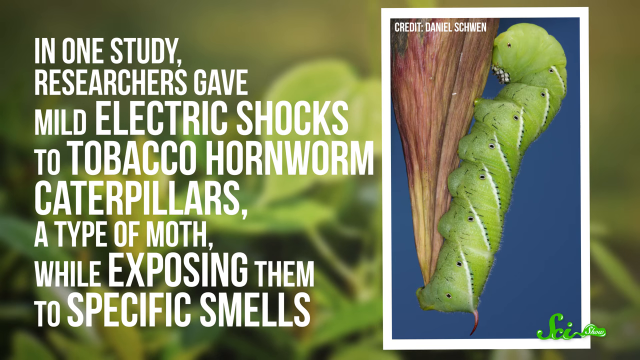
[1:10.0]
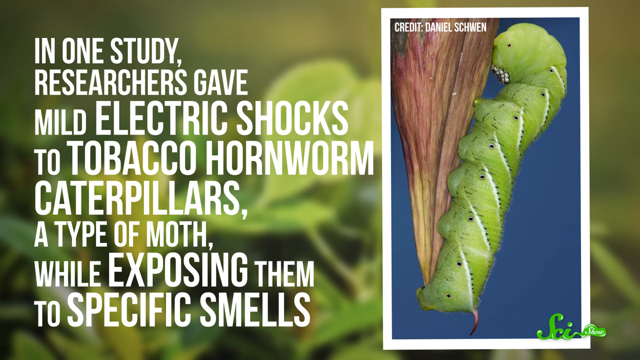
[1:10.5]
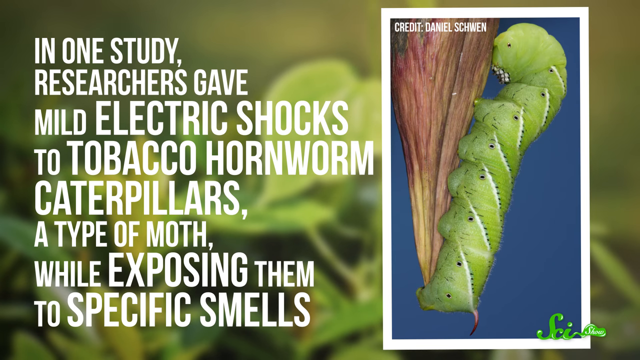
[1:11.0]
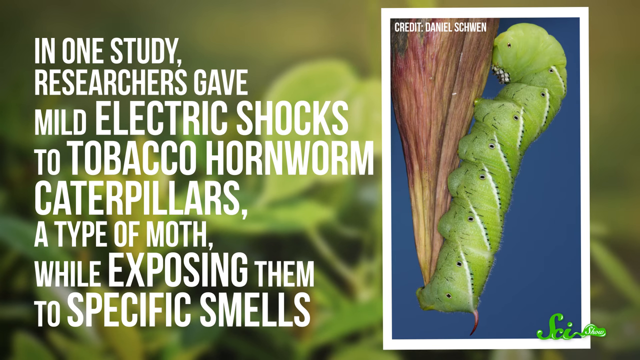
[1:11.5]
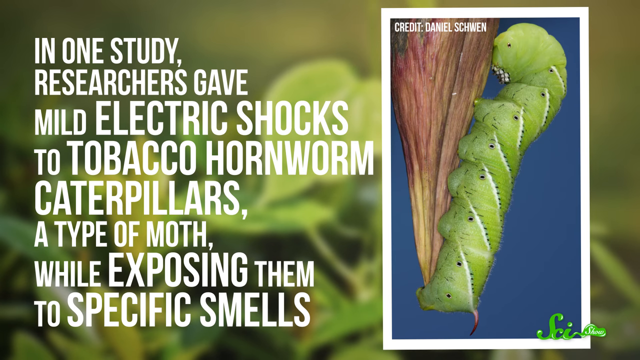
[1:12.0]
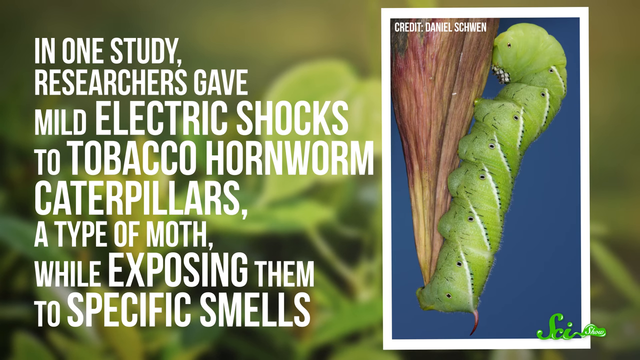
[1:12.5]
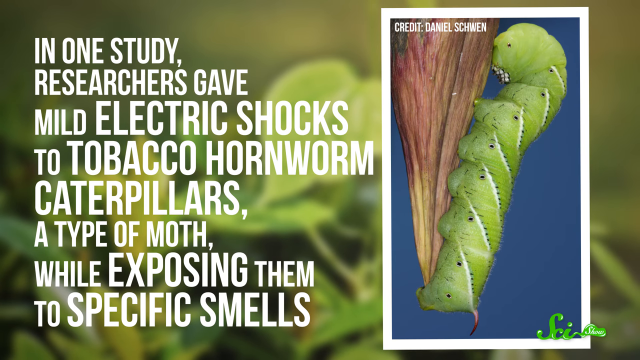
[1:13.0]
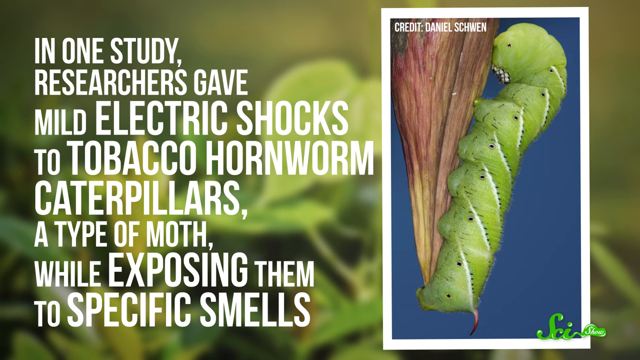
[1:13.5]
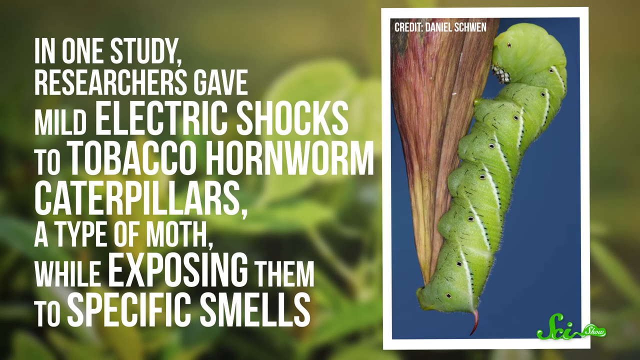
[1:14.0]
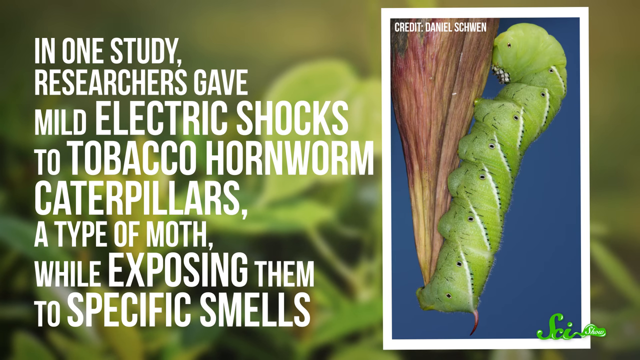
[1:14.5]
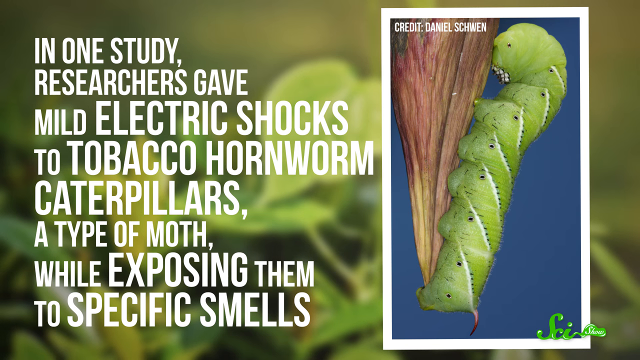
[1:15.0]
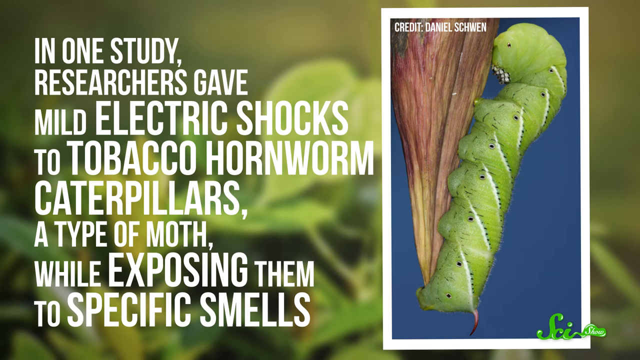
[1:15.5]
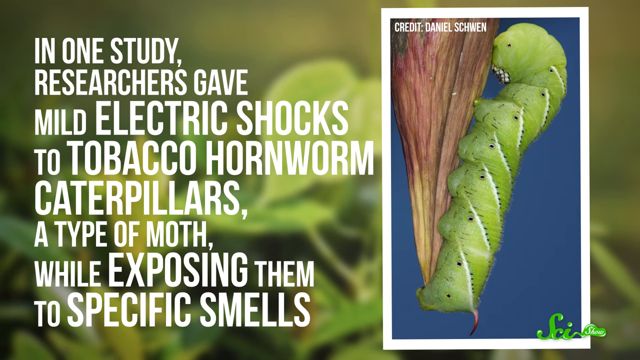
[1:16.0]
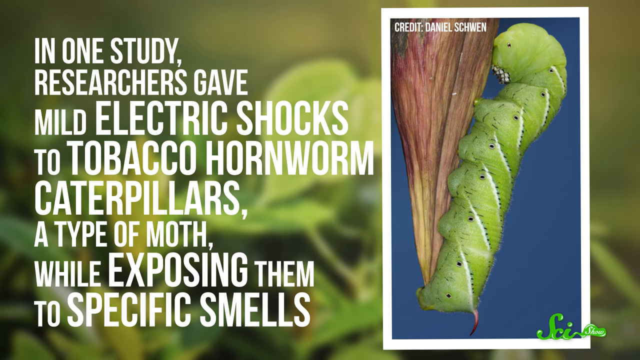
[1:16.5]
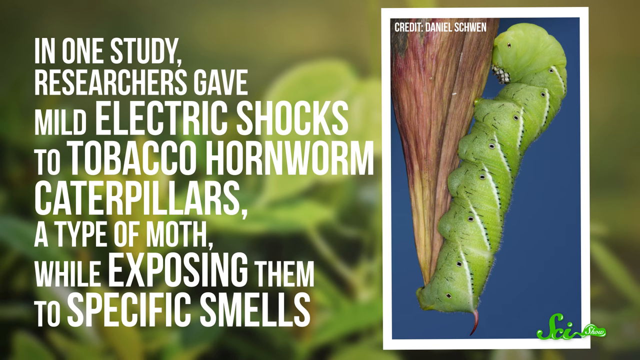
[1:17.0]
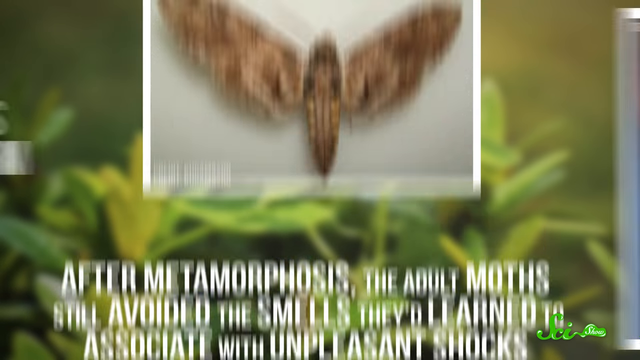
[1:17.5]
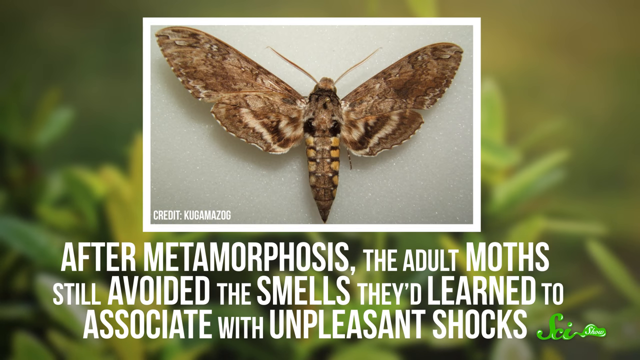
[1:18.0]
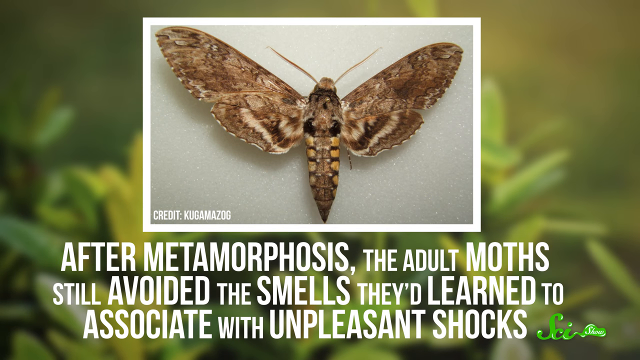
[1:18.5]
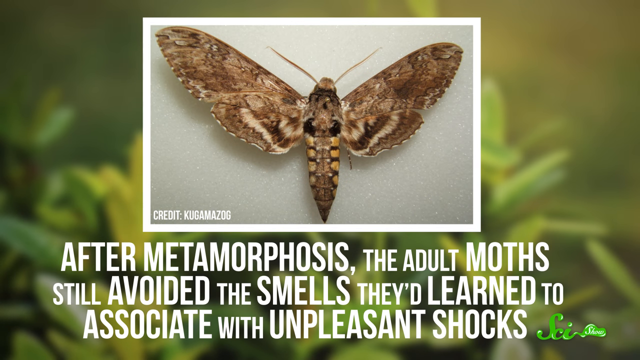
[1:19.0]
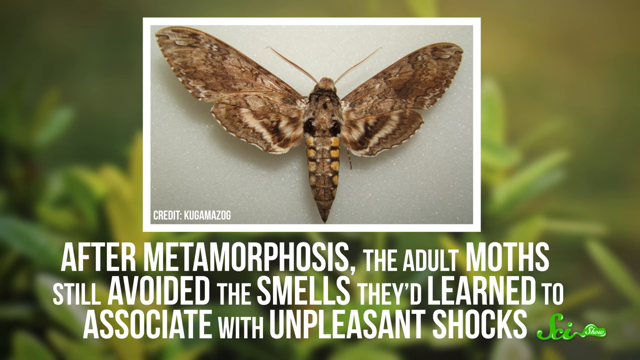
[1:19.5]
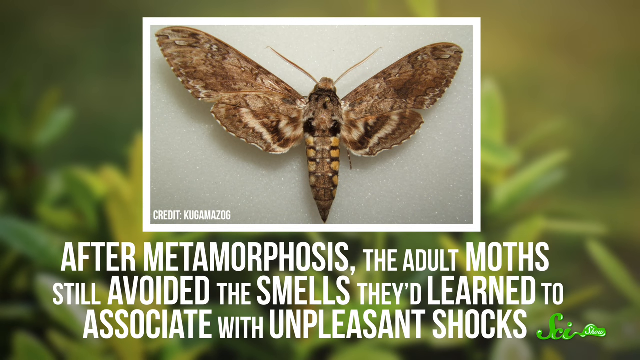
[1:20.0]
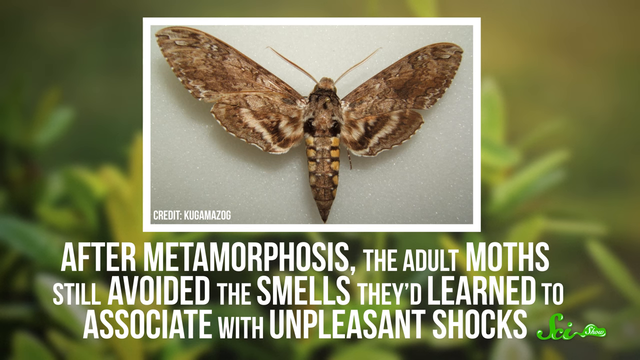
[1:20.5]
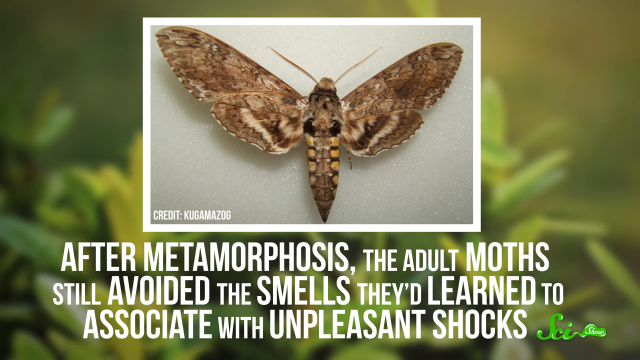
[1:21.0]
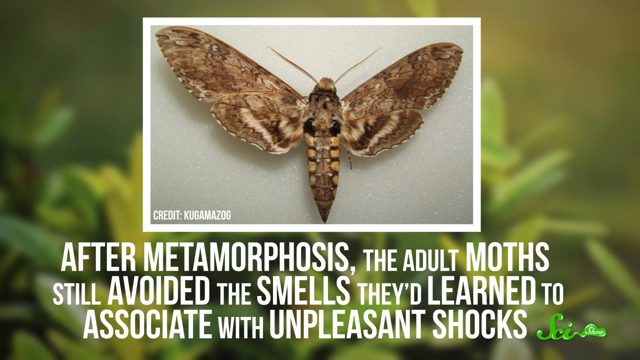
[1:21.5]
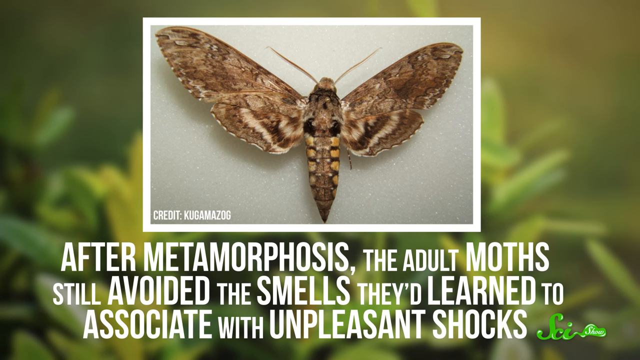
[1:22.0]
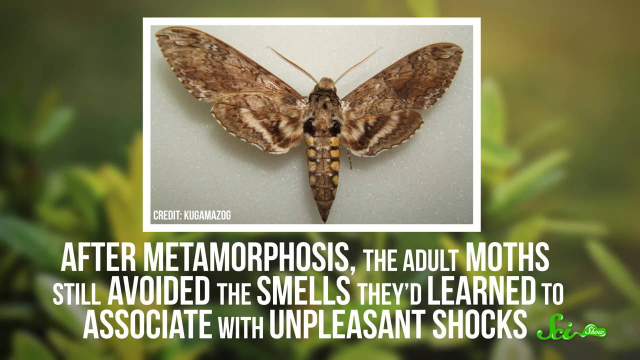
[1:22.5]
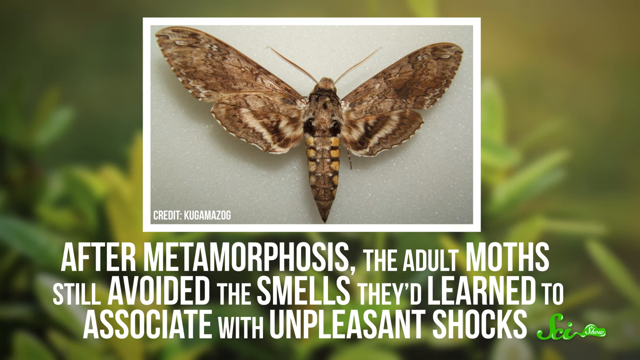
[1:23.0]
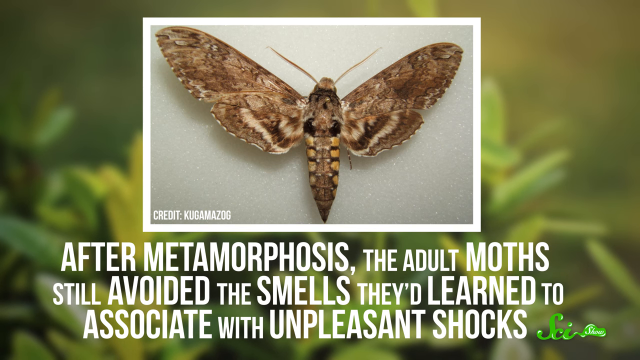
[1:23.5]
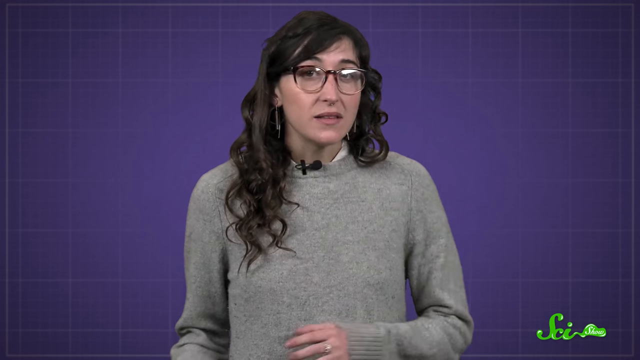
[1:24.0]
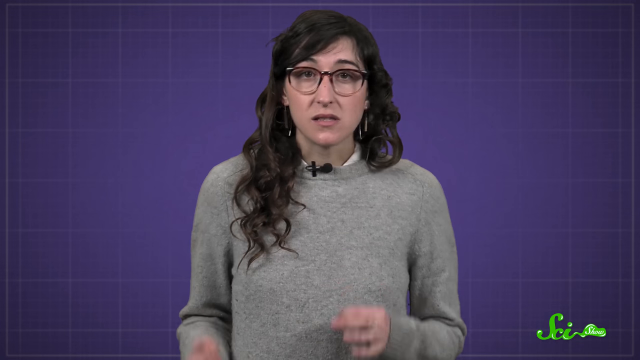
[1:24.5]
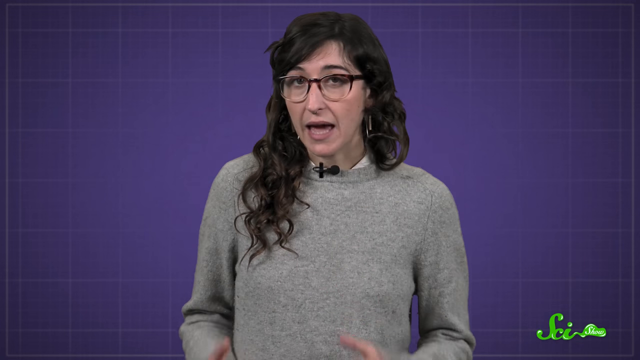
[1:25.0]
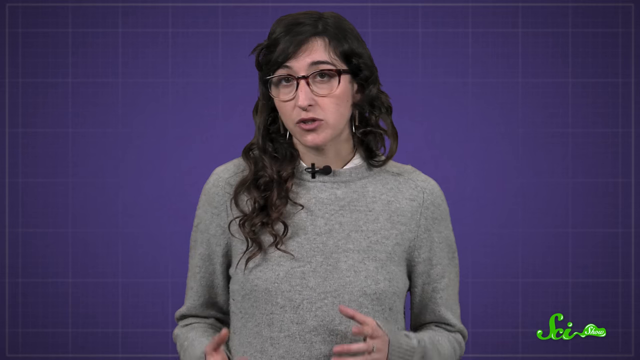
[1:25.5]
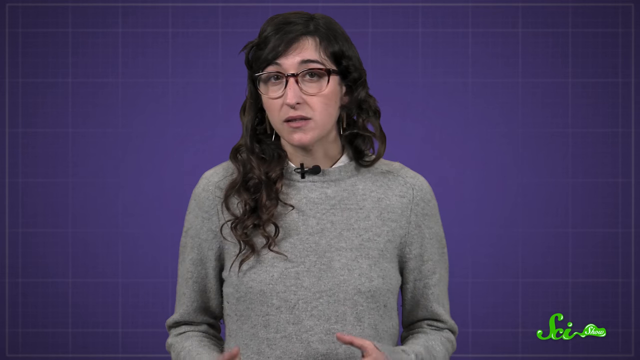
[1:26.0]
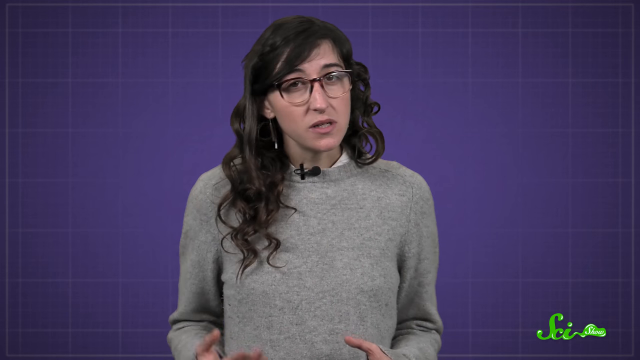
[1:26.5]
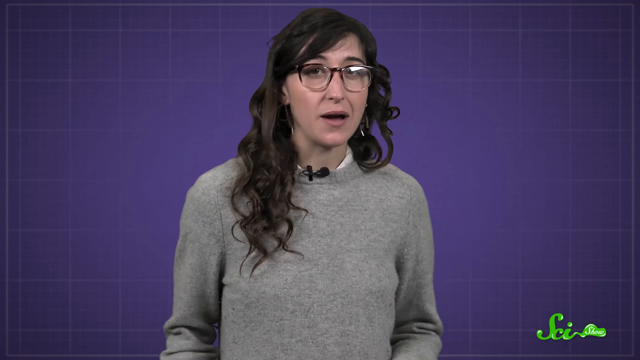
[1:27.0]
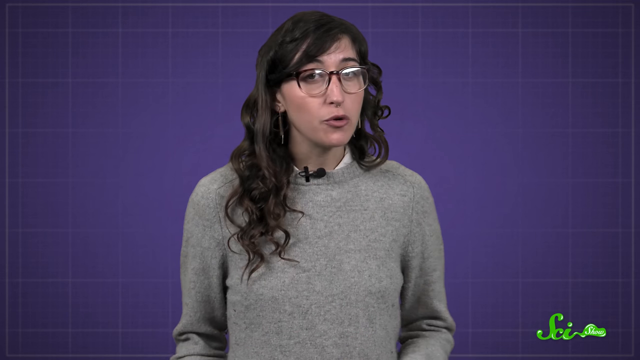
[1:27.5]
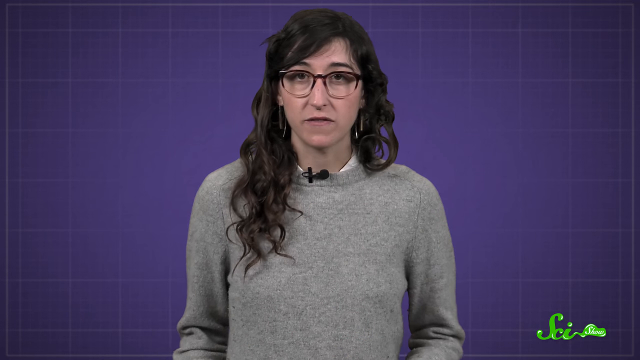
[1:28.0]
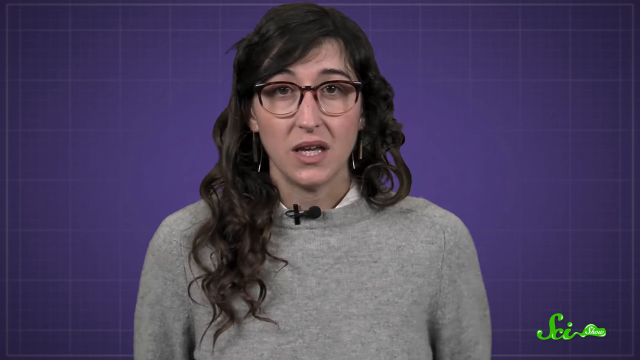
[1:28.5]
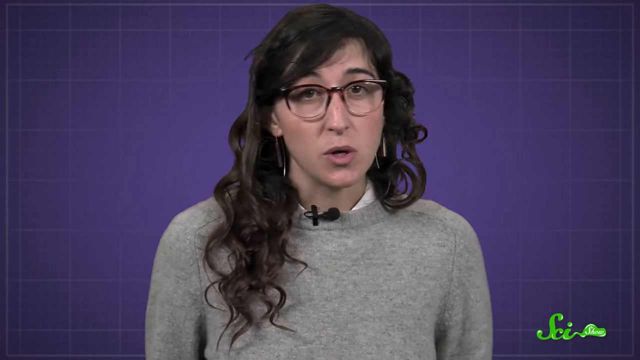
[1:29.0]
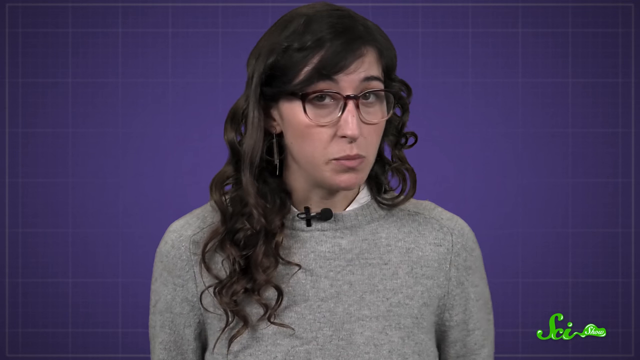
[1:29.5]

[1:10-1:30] The text reads "in one study researchers gave mild electric shocks to tobacco hornworm caterpillars, a type of moth, while exposing them to specific smells," followed by "after metamorphosis, the adult moths still avoided the smells they'd learned to associate with unpleasant shocks." The woman then talks some more.